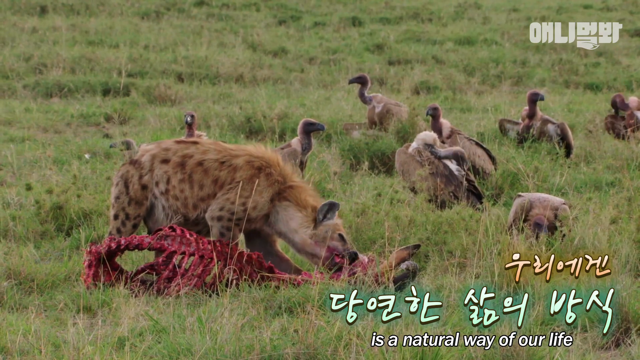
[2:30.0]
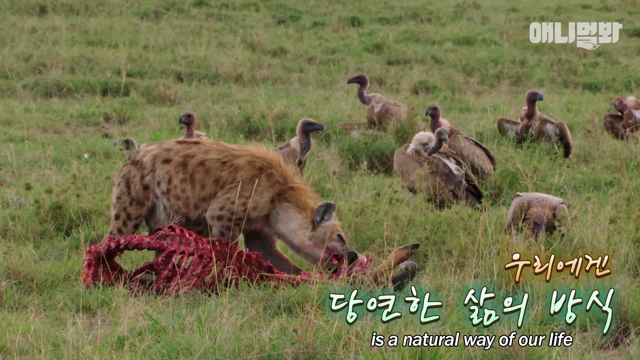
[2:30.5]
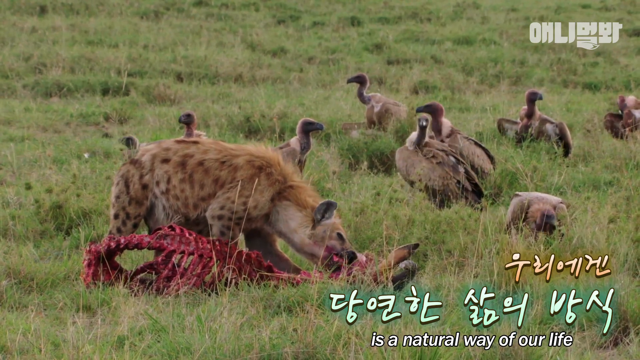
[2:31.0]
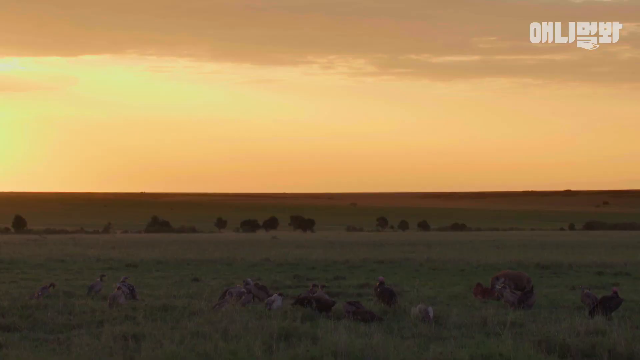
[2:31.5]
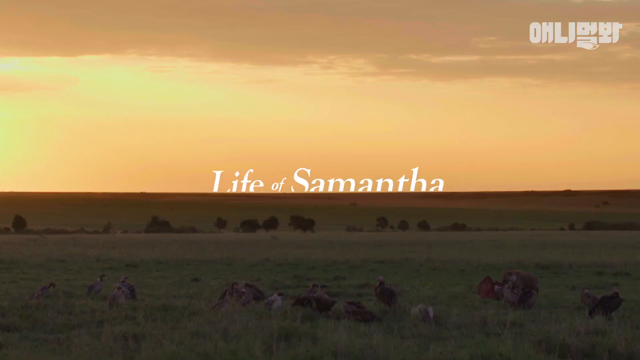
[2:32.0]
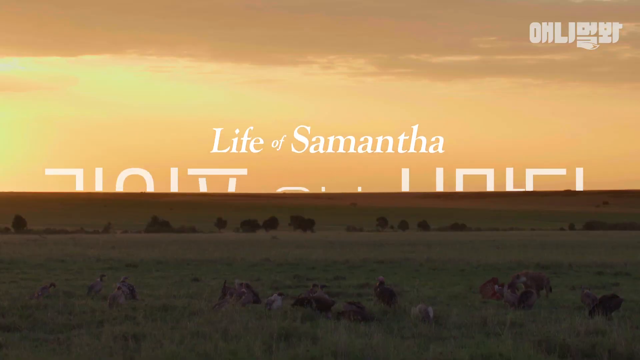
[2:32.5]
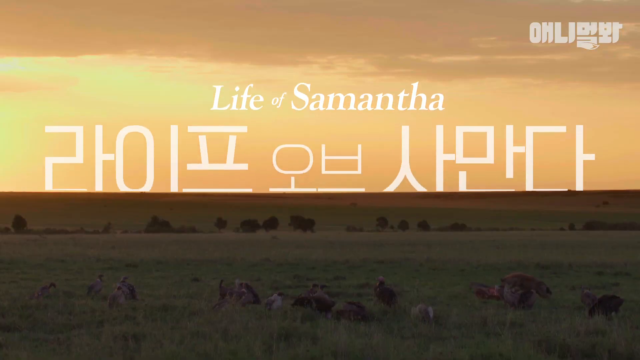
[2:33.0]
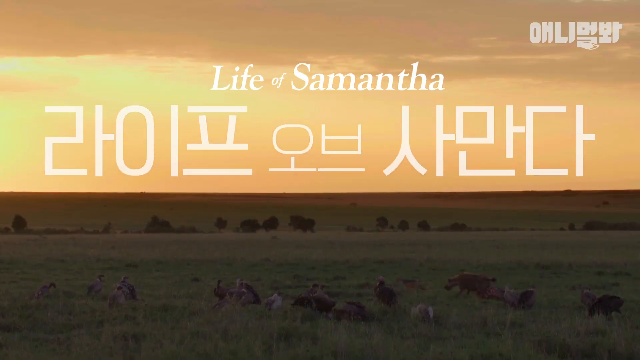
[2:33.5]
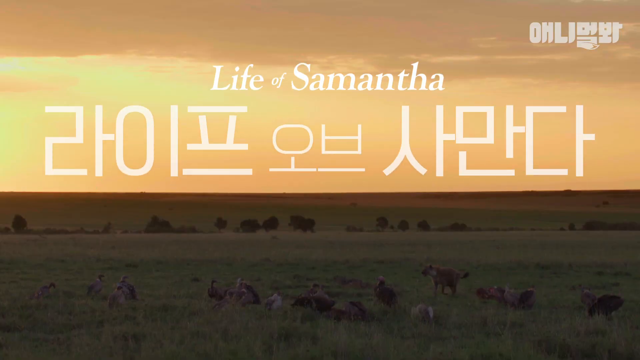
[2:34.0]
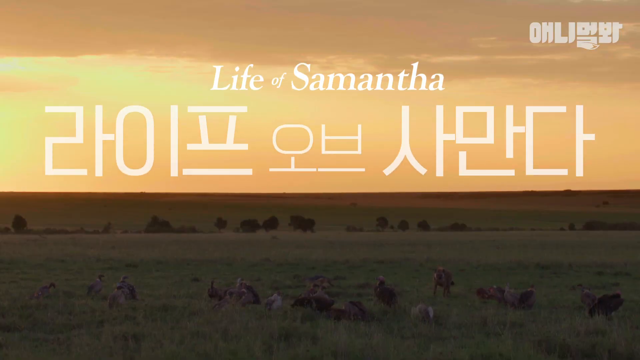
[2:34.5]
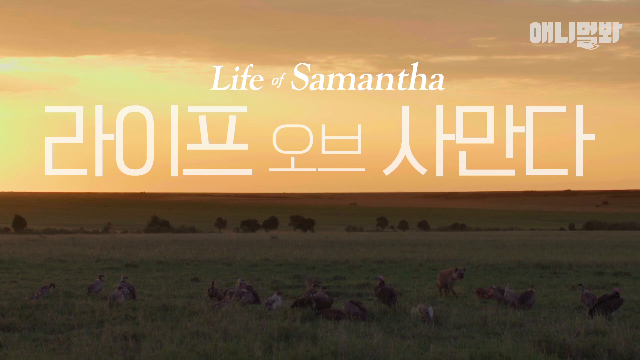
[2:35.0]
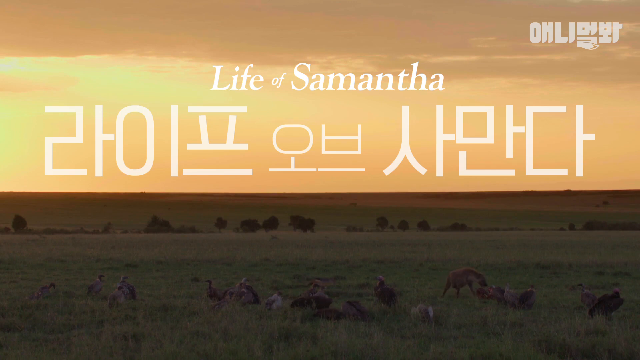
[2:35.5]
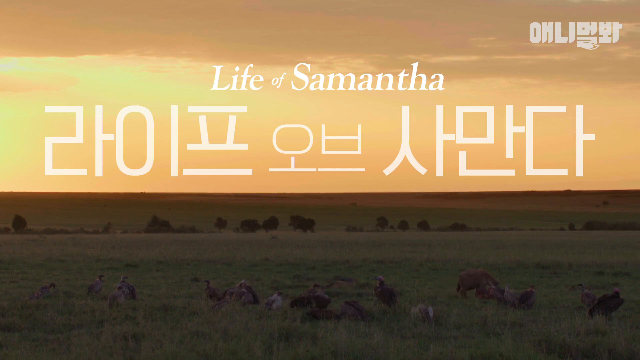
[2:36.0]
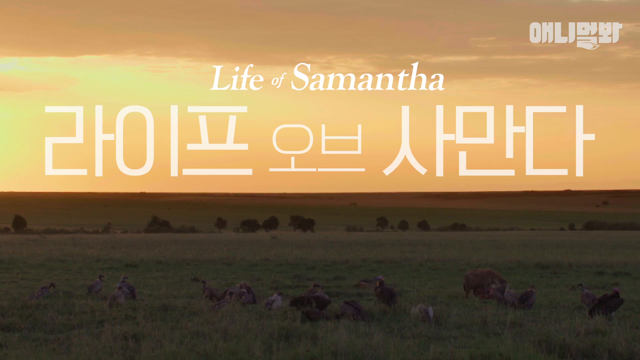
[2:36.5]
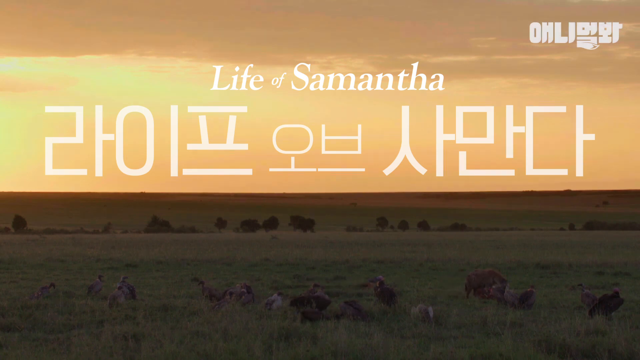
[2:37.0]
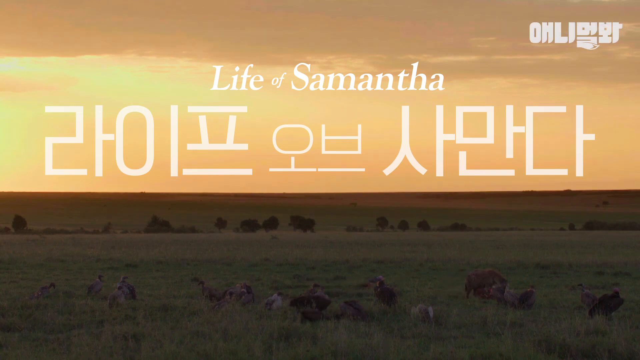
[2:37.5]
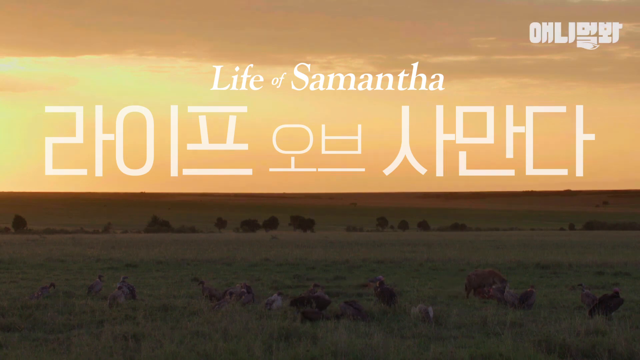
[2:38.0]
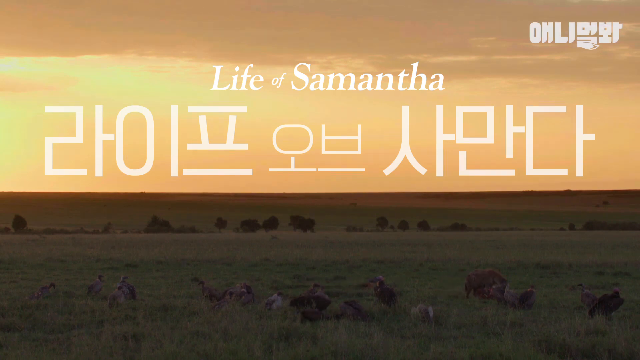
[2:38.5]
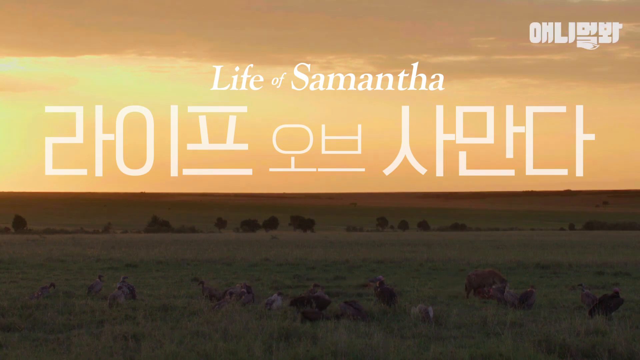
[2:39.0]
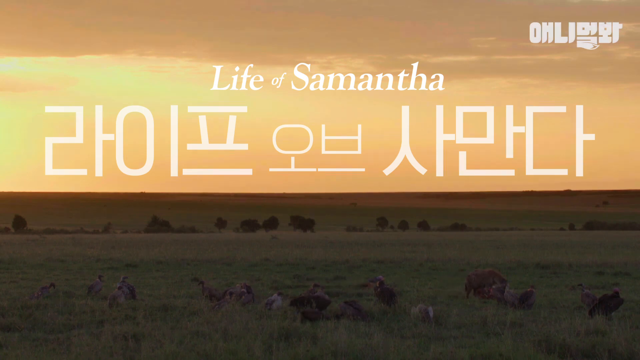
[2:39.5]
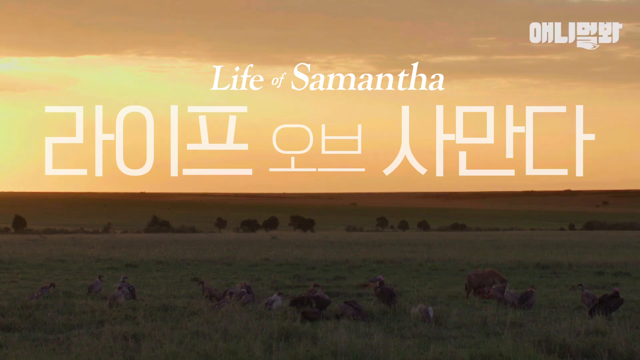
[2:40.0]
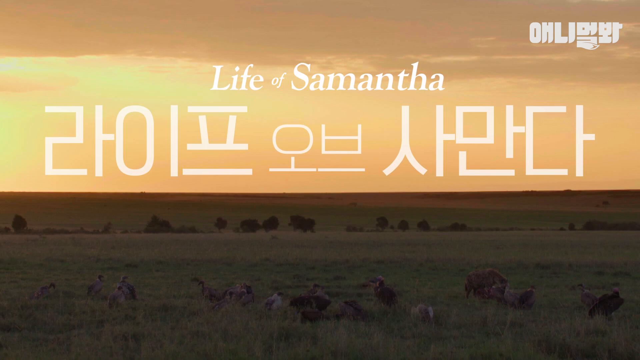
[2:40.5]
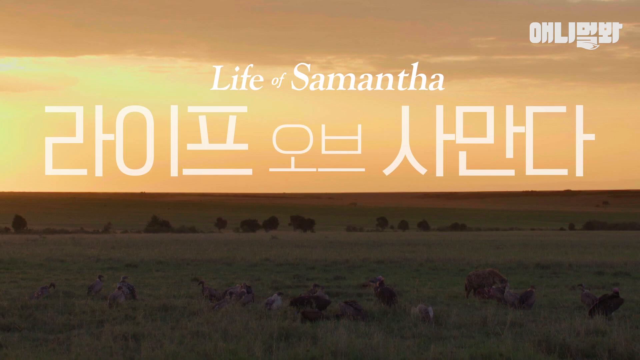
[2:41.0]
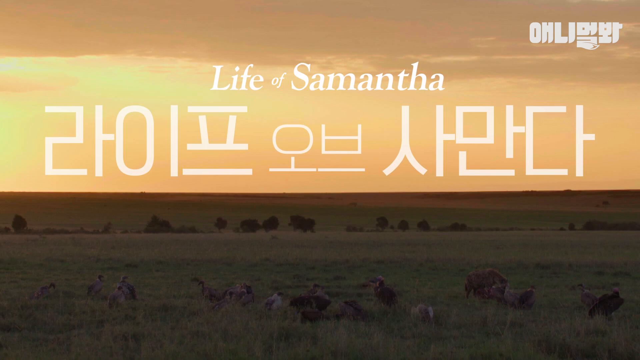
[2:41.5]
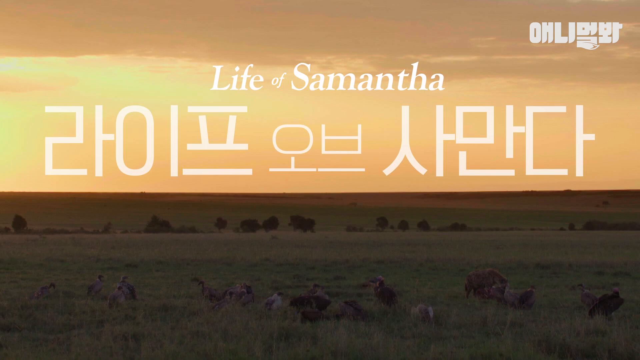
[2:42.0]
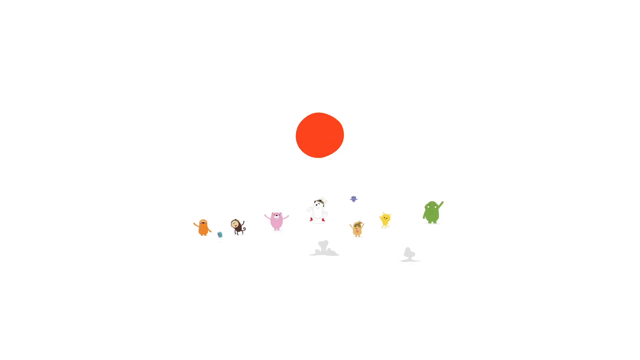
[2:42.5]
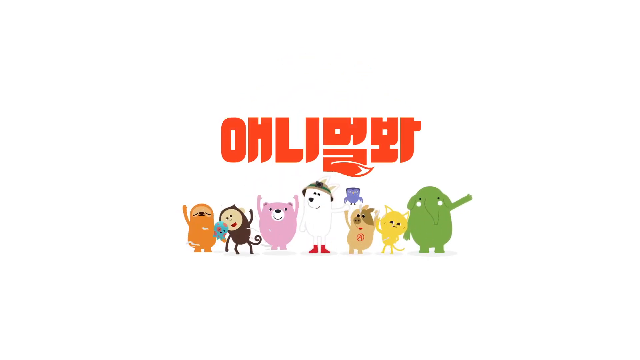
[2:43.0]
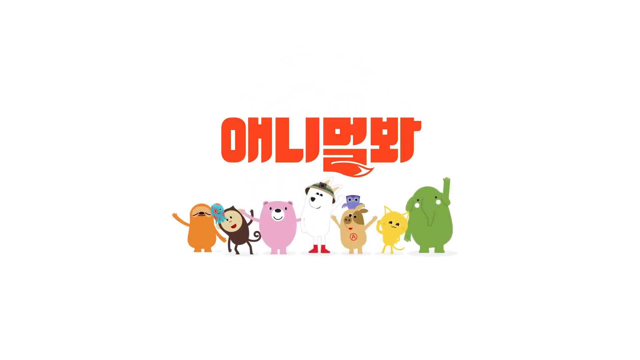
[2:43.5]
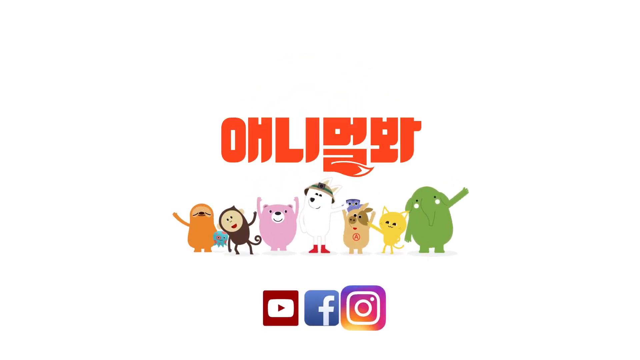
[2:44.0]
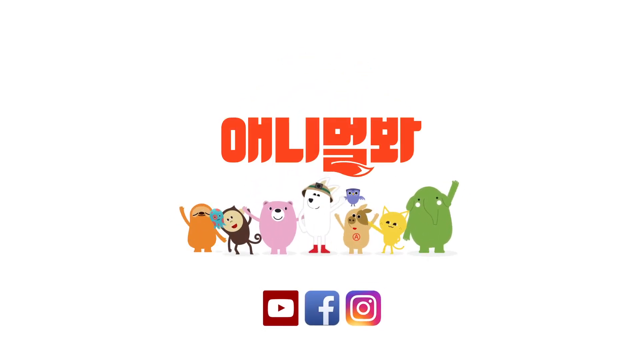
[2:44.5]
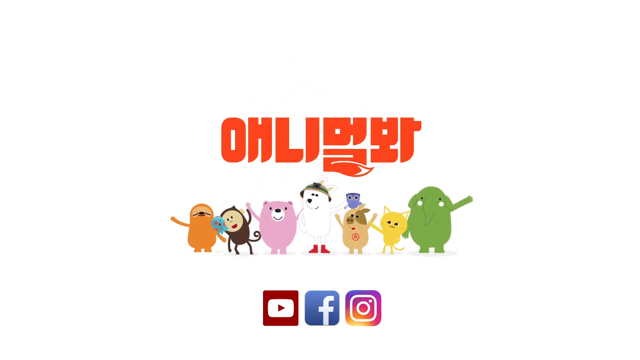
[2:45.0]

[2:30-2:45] A title card that says "Life of Samantha" appears with a sunset backdrop, with the lion and the vultures dimly lit in the incoming night. The lion is still eating the antelope carcass, while the vultures are kind of hanging out. The rest of the video is this ending title card with the lion eating the carcass on the ground, as a final shot. No hyenas appear.